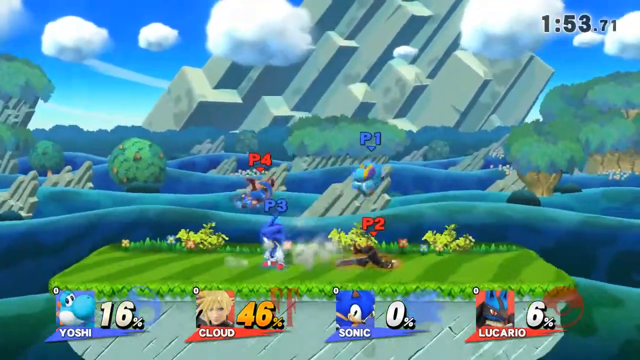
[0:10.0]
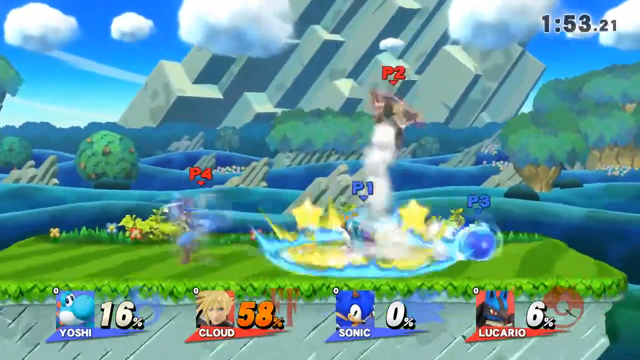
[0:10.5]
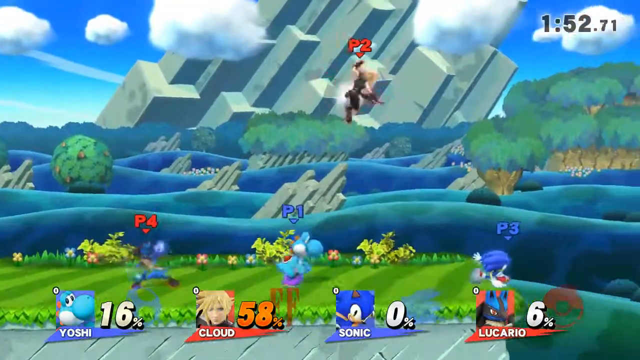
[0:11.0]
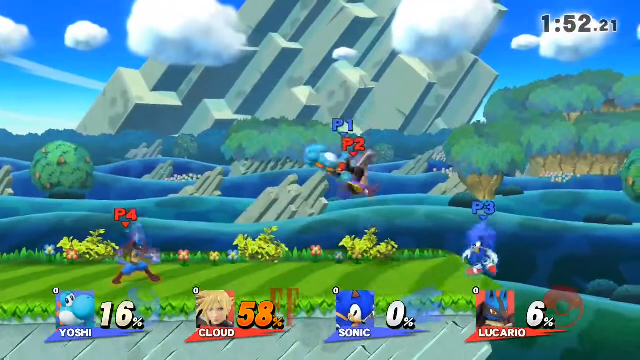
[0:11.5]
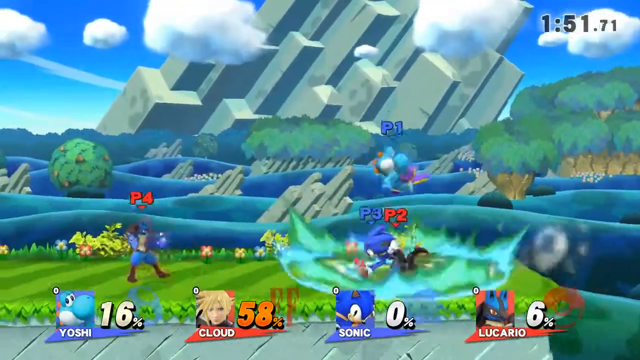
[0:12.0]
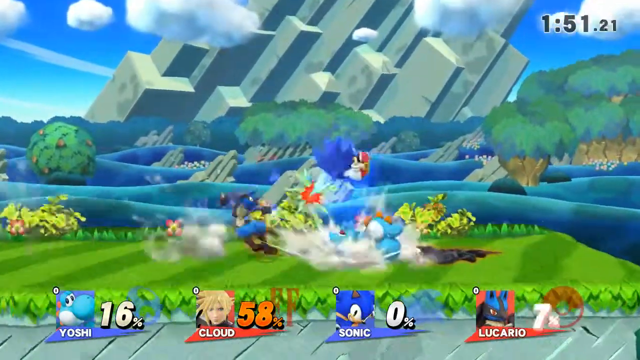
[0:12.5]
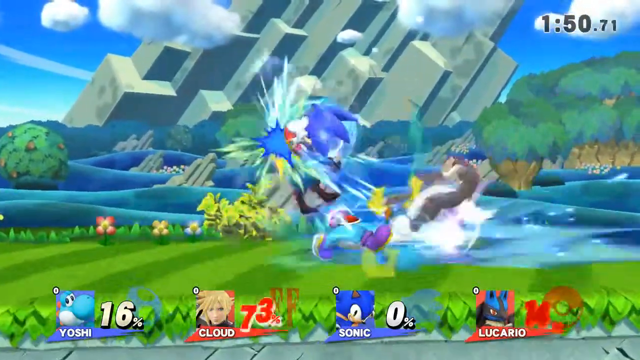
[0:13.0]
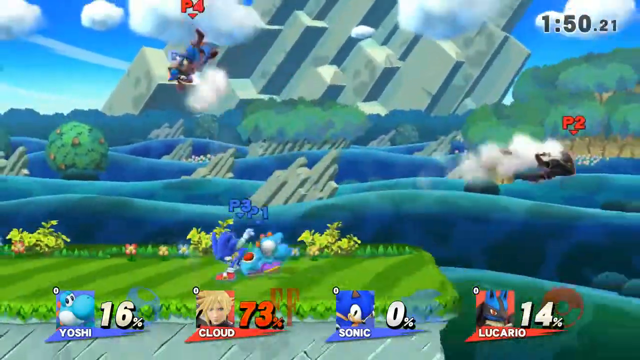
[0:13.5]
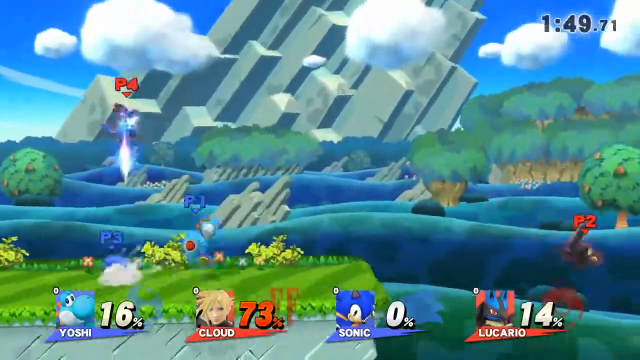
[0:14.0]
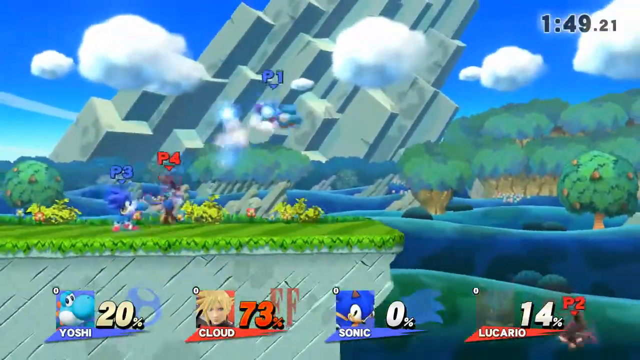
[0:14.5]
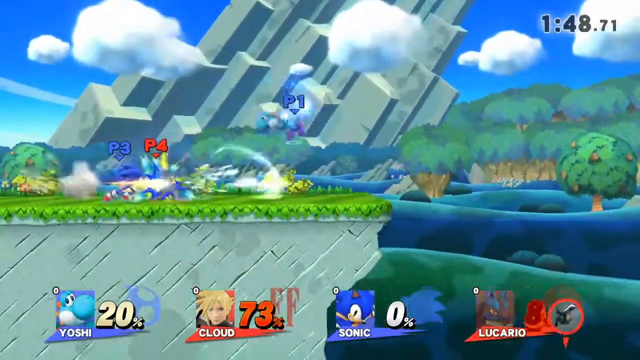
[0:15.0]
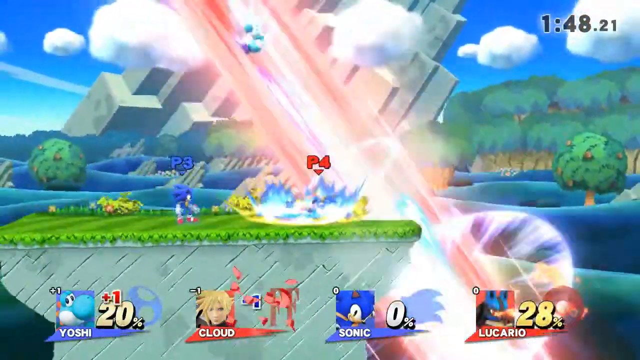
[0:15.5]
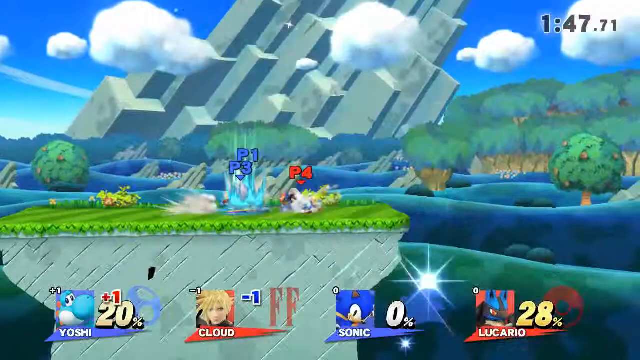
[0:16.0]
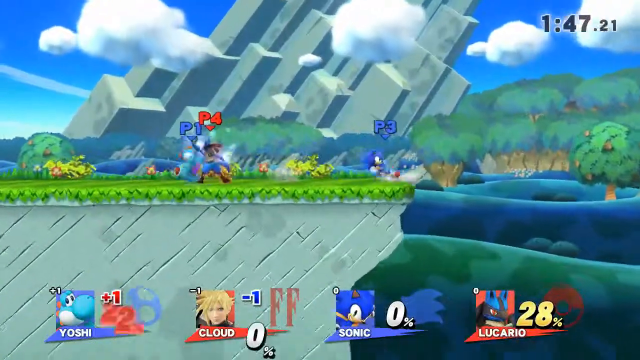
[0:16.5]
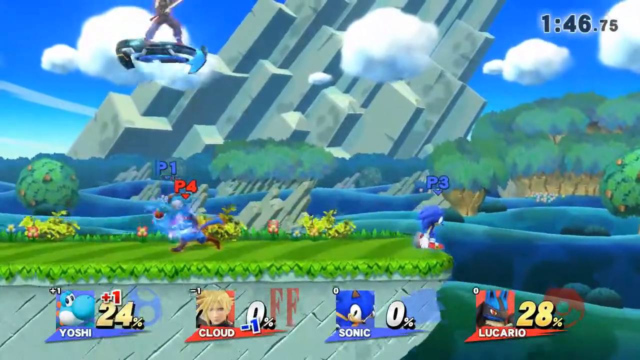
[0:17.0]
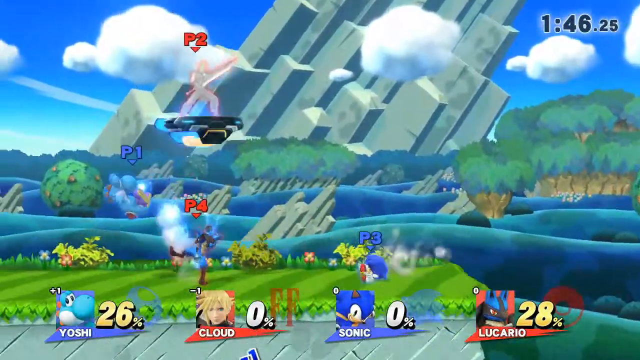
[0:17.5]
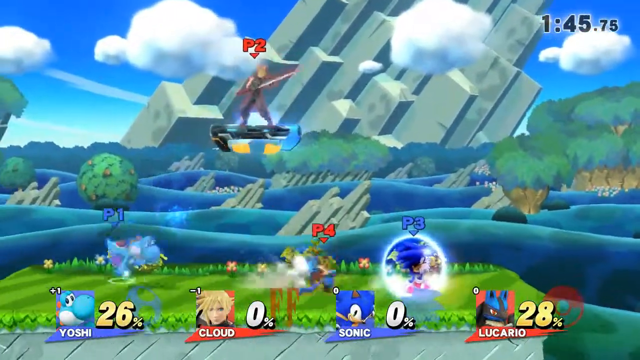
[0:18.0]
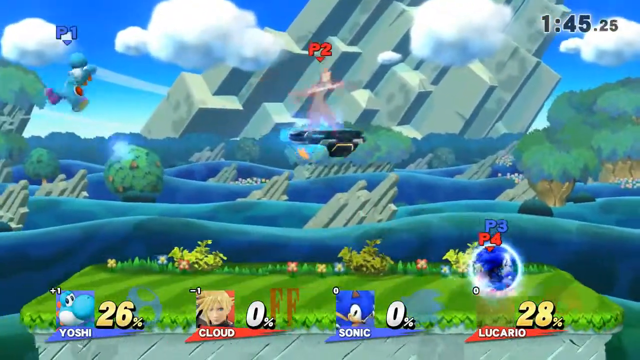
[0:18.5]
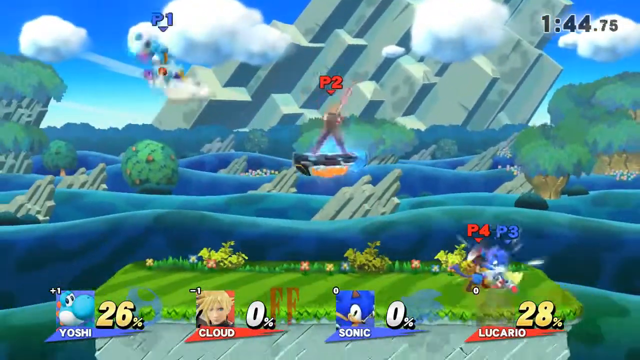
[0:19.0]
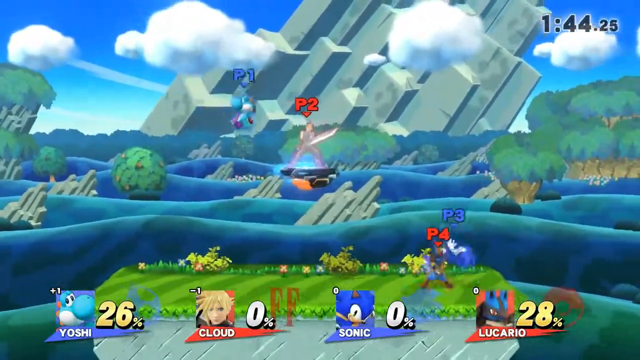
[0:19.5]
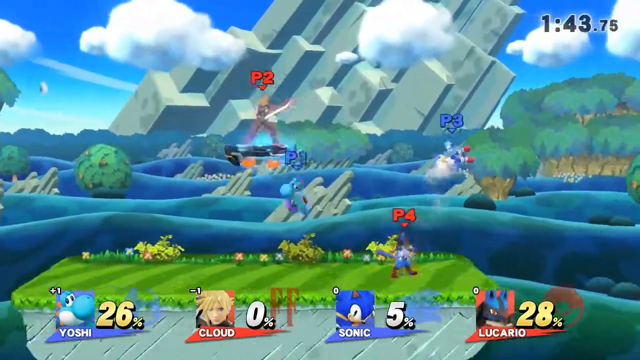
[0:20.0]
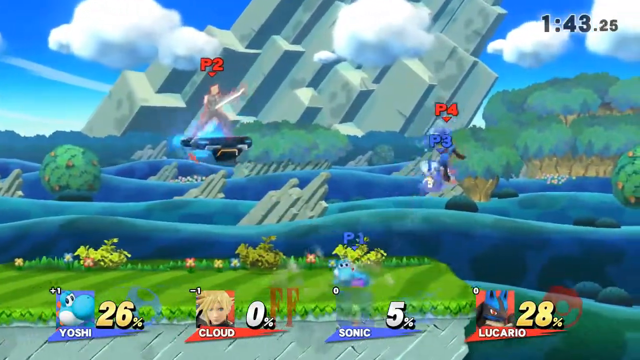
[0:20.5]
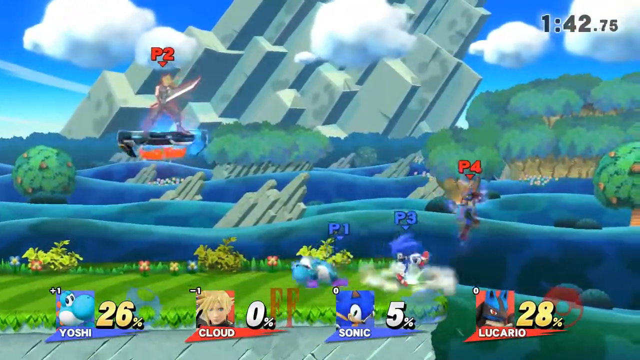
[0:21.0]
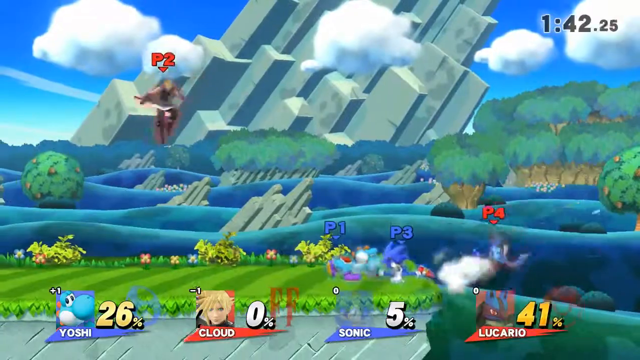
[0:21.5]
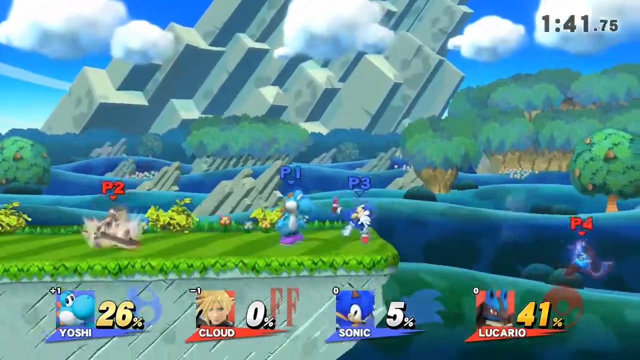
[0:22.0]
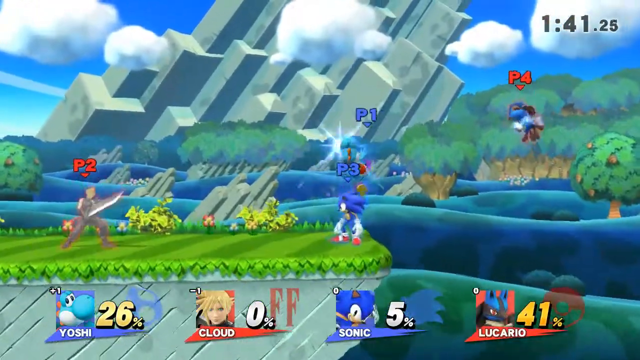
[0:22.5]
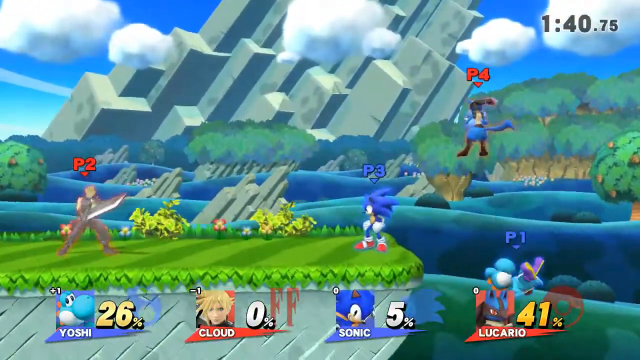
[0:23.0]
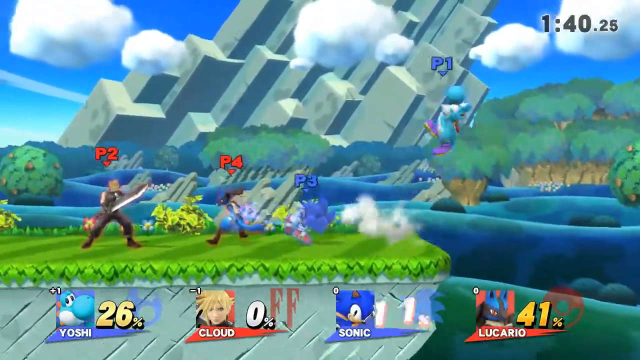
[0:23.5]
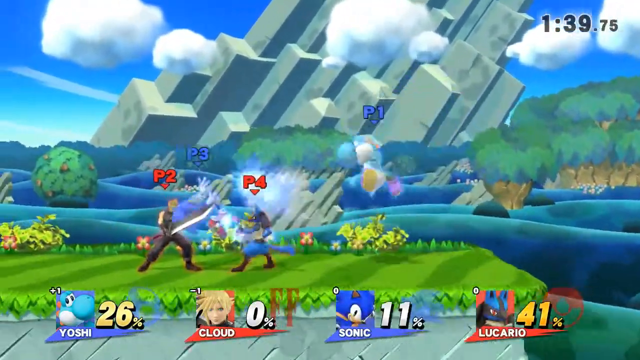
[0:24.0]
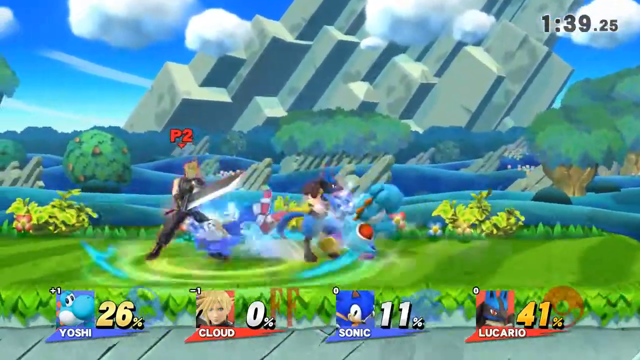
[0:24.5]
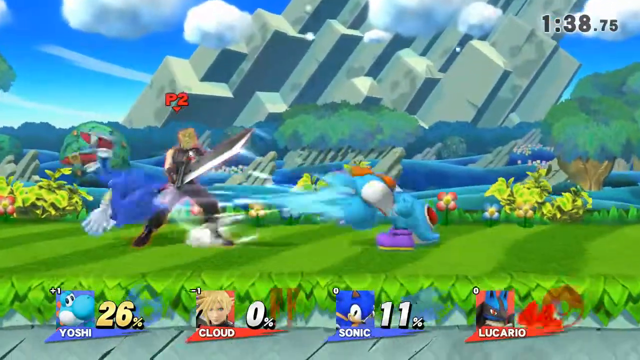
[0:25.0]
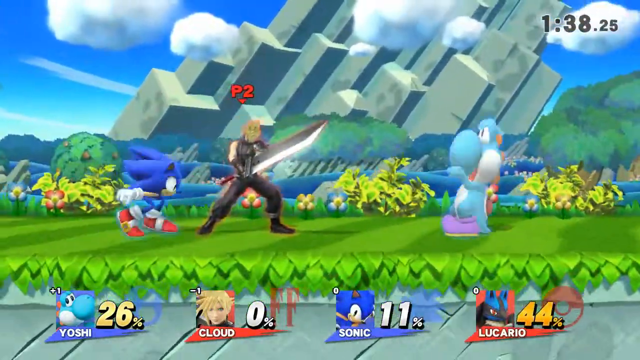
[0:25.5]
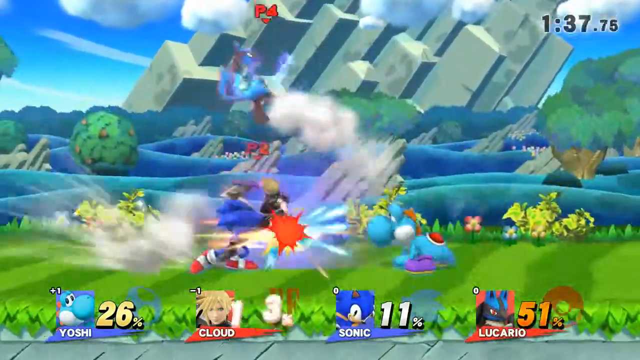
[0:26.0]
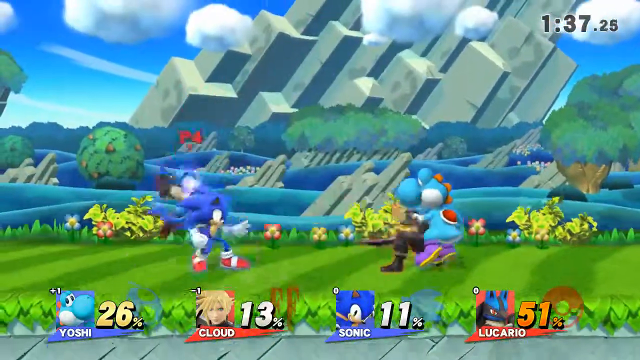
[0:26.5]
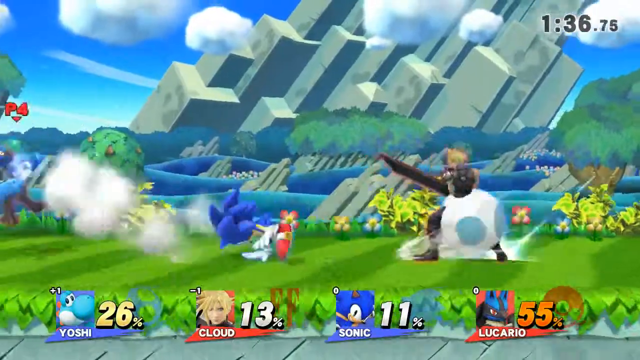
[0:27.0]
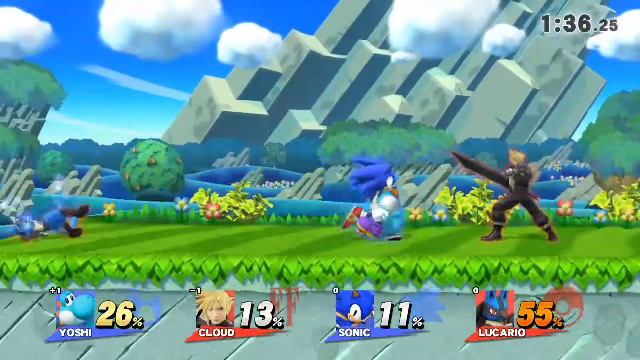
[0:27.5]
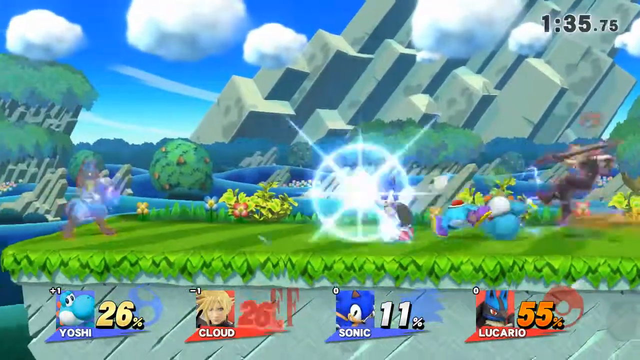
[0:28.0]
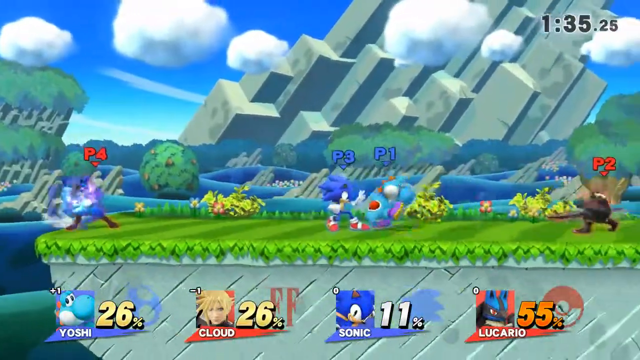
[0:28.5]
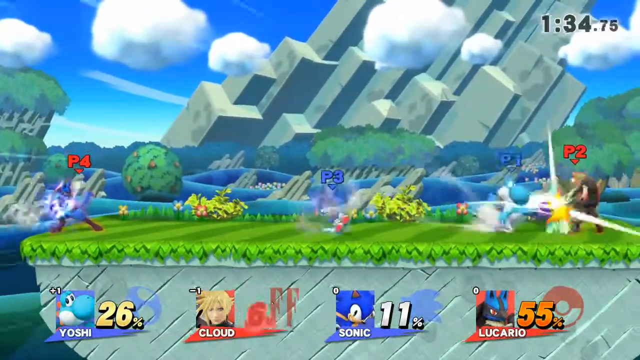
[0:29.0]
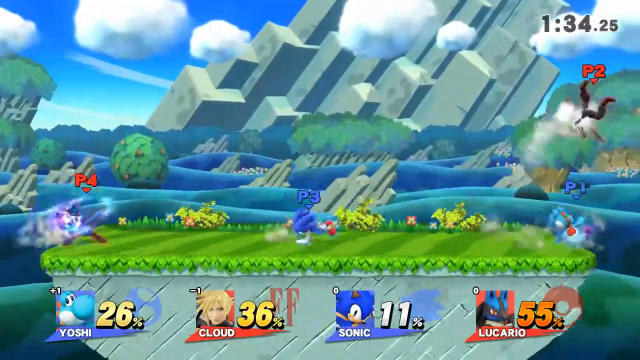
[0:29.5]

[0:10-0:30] The clock shows 1 minute 53 seconds as both teams keep fighting. In the background there is a huge mountain, with rocks sticking out of the water behind the fighters and trees in the water. The main platform they fight on is a flat rock with some grass on it. The characters push each other and jump in the air, and one of the players on the red team is knocked off, apparently Cloud, who gets a negative one. The percentages, which appear to show damage, change over the shot: Yoshi goes from 16% to 26%, Cloud from 46% to 36%, Sonic from 0% to 11%, and Lucario from 6% to 55%.